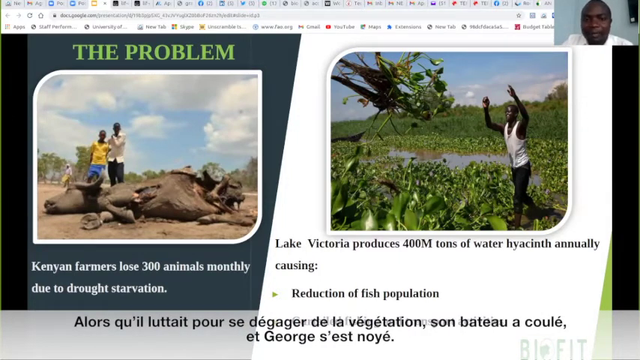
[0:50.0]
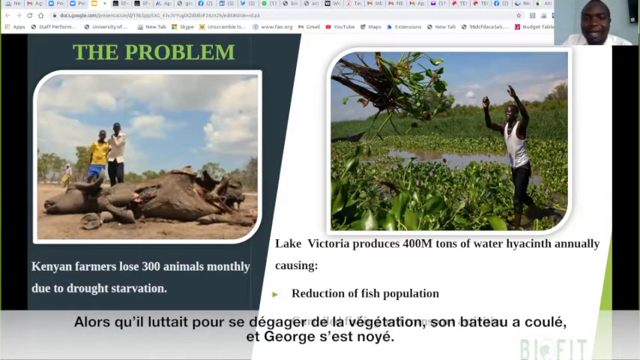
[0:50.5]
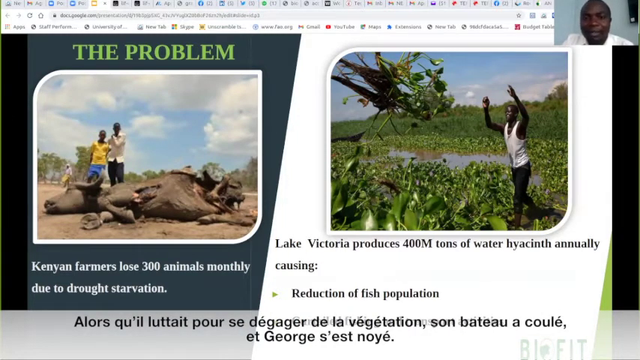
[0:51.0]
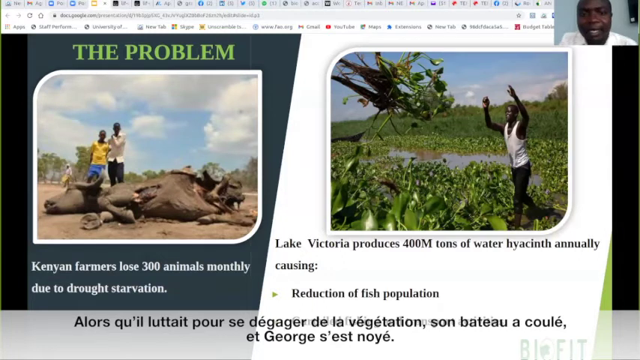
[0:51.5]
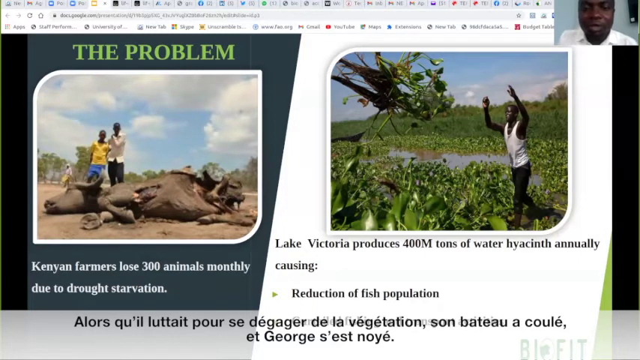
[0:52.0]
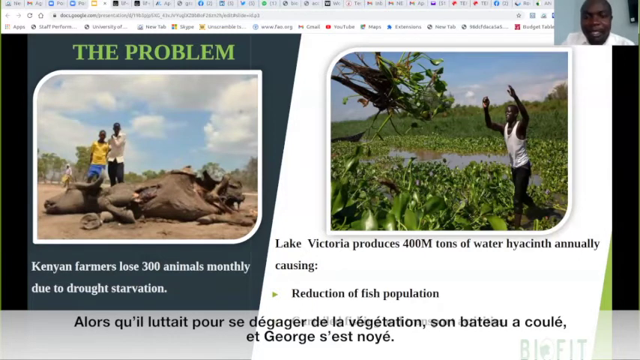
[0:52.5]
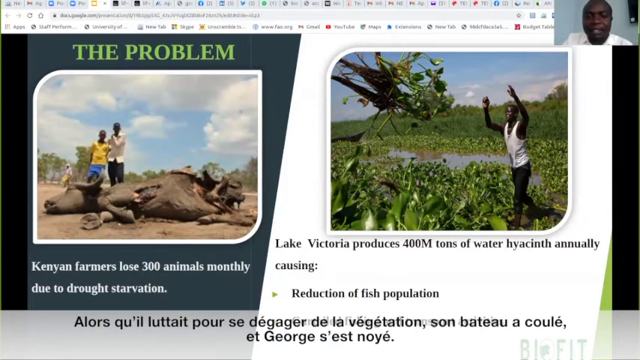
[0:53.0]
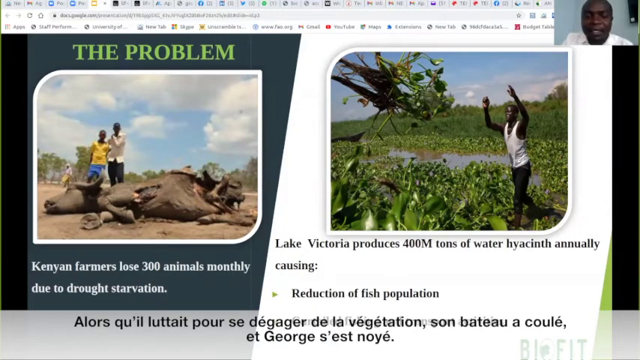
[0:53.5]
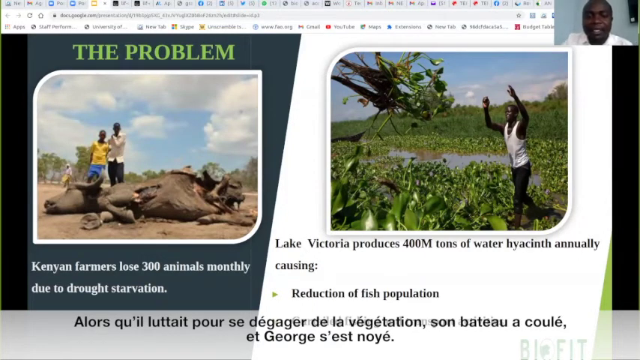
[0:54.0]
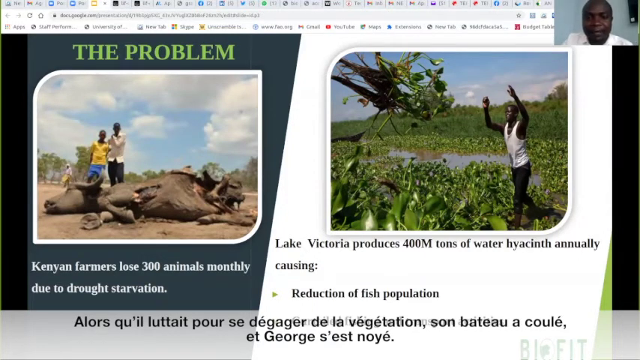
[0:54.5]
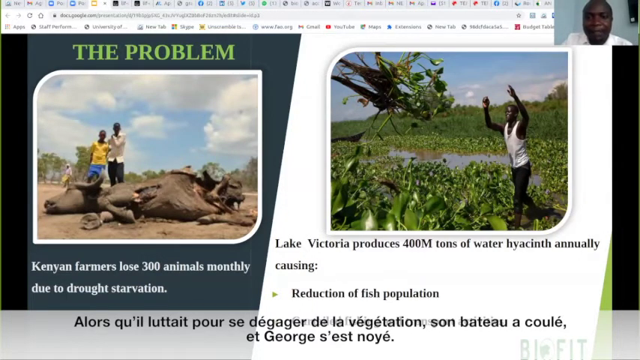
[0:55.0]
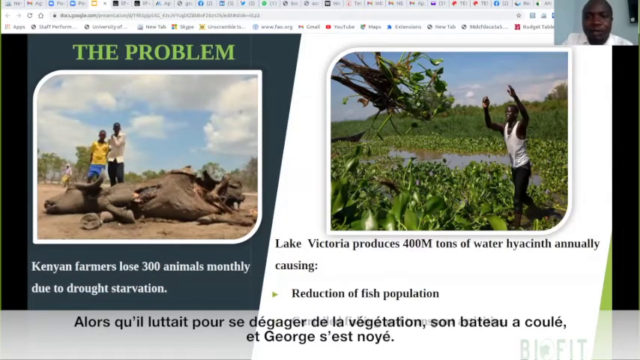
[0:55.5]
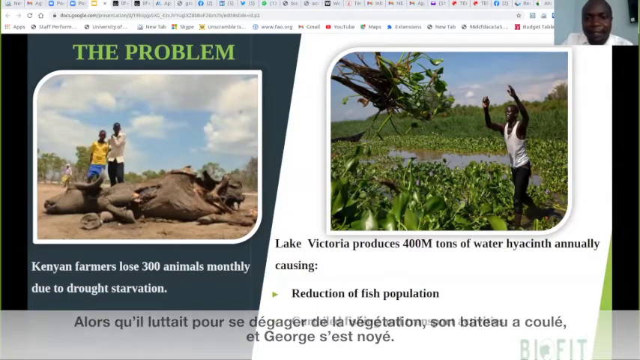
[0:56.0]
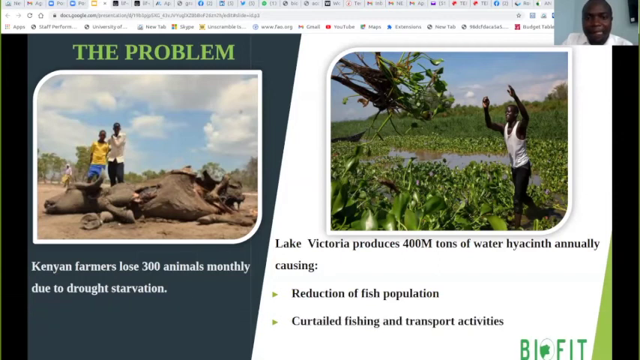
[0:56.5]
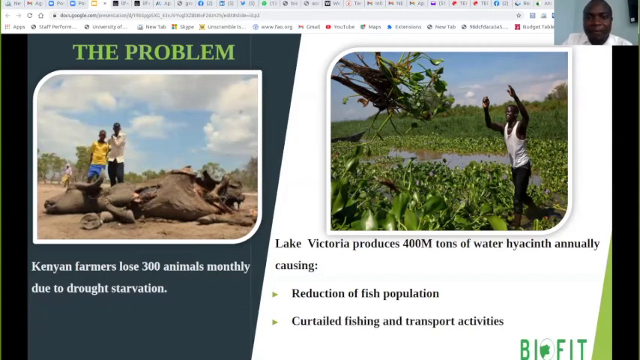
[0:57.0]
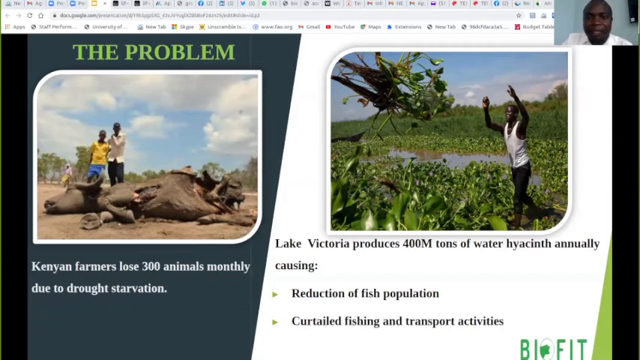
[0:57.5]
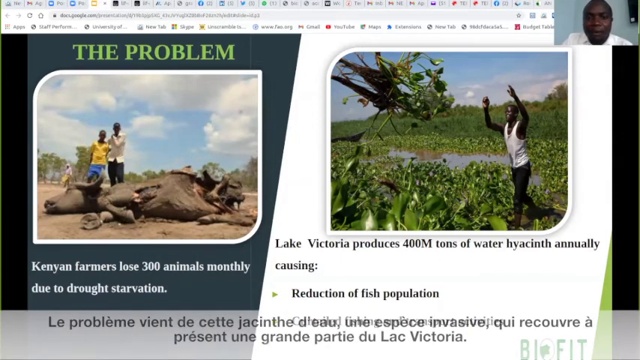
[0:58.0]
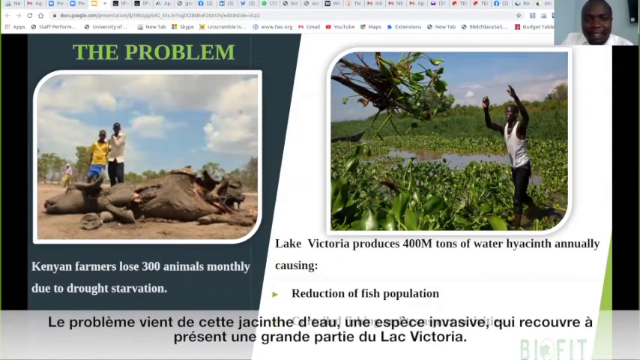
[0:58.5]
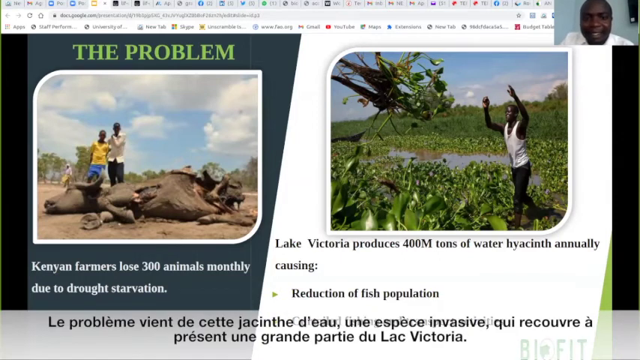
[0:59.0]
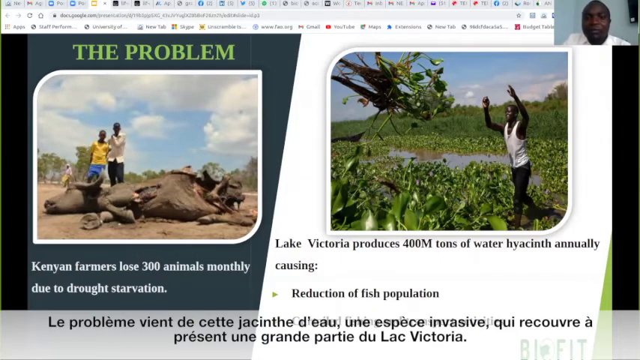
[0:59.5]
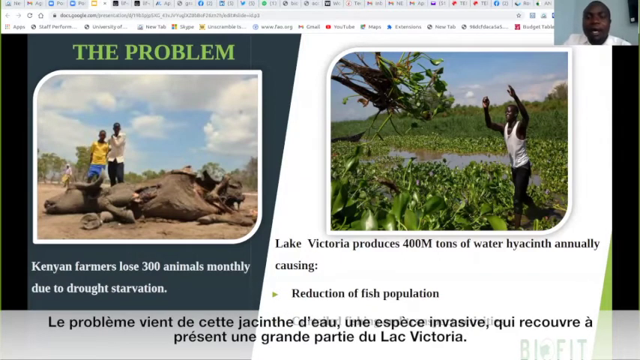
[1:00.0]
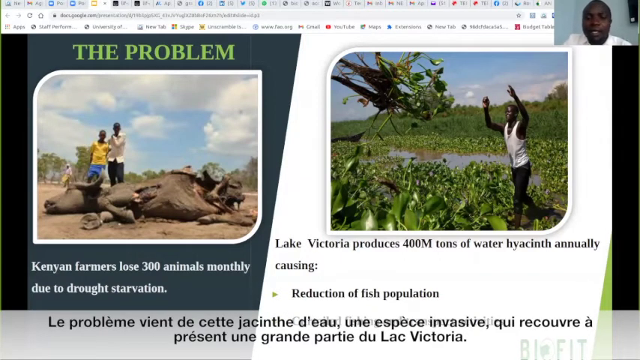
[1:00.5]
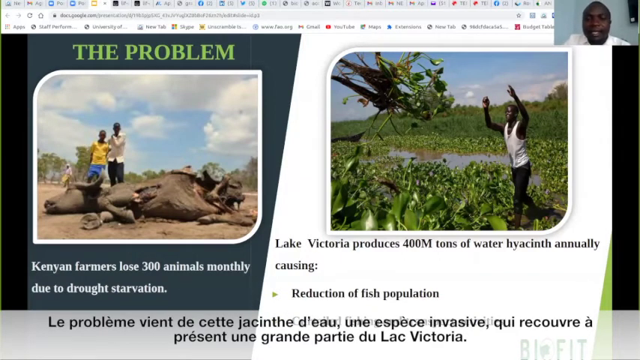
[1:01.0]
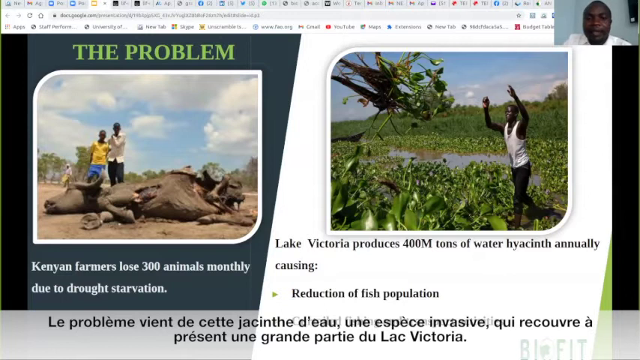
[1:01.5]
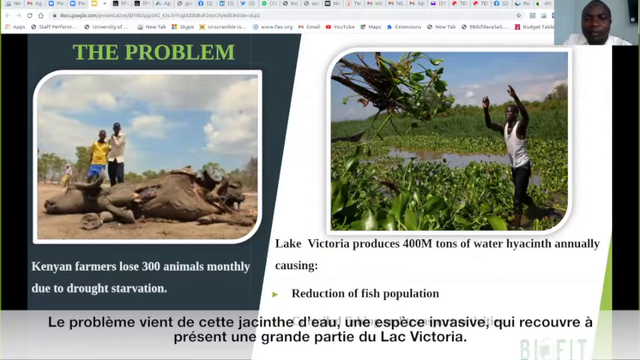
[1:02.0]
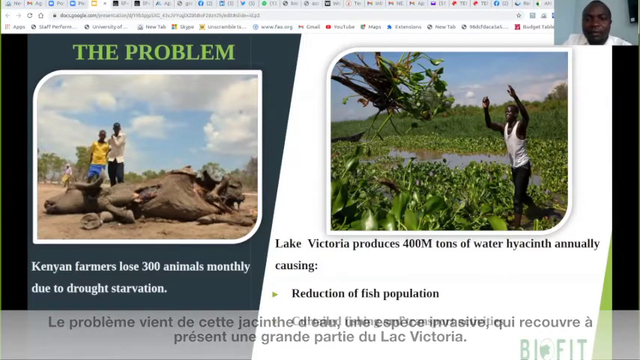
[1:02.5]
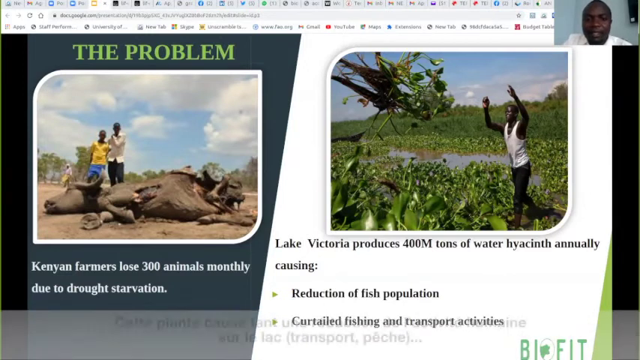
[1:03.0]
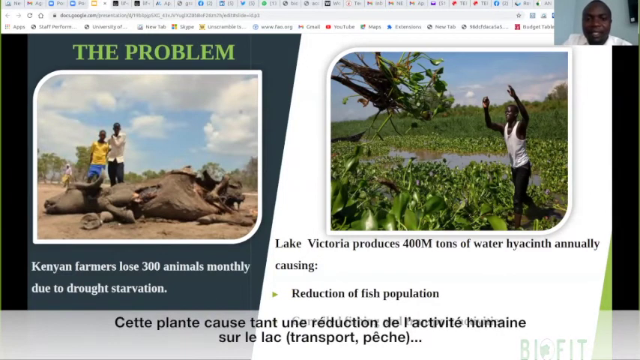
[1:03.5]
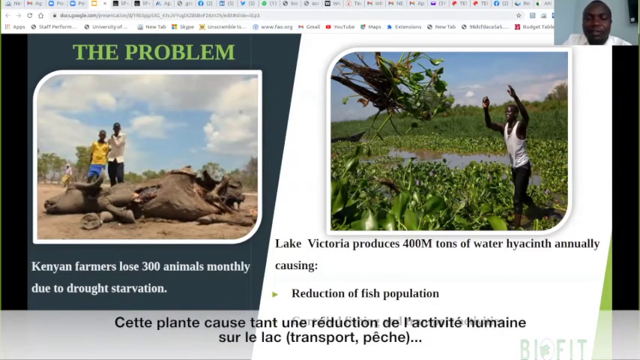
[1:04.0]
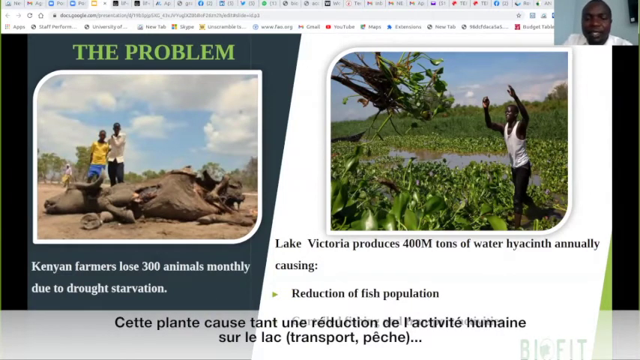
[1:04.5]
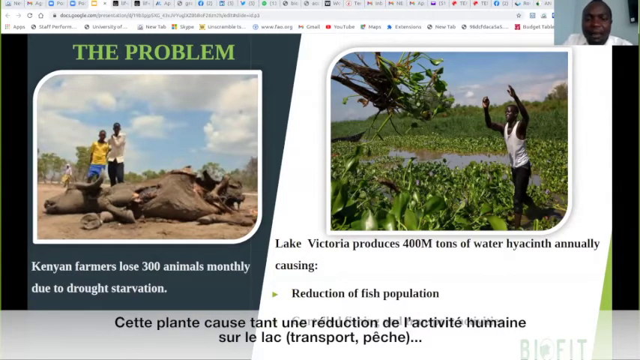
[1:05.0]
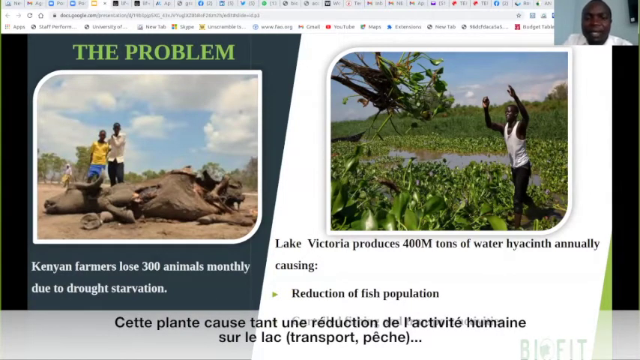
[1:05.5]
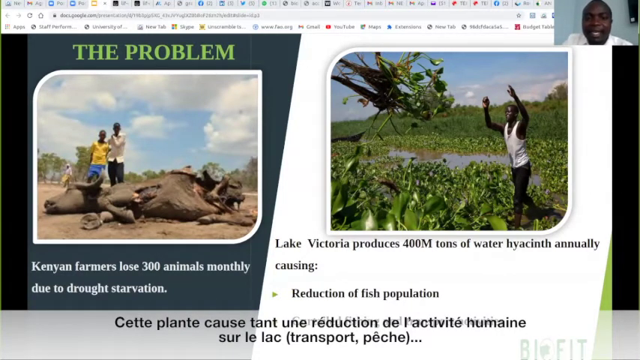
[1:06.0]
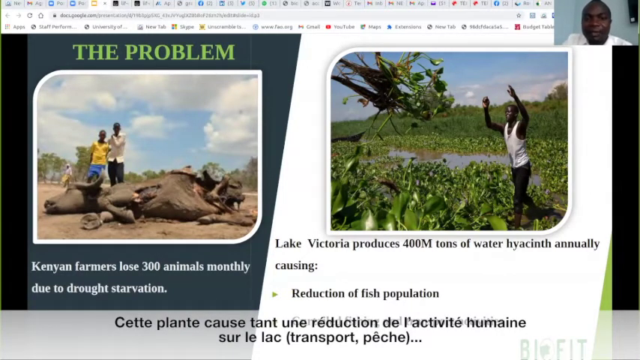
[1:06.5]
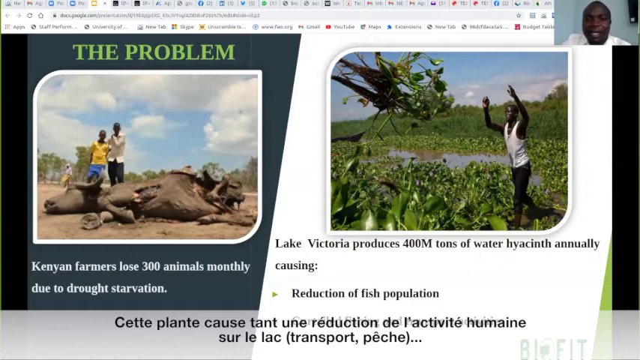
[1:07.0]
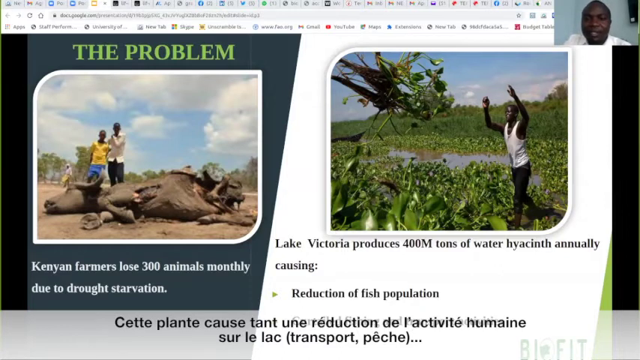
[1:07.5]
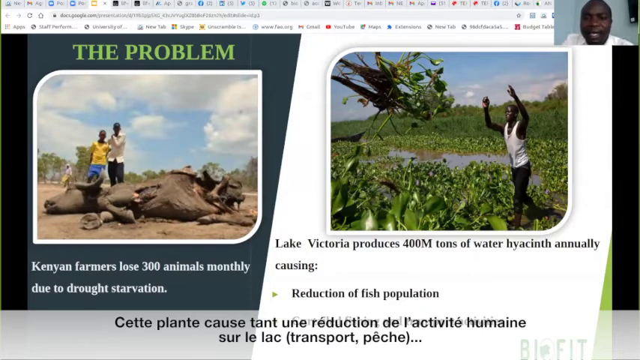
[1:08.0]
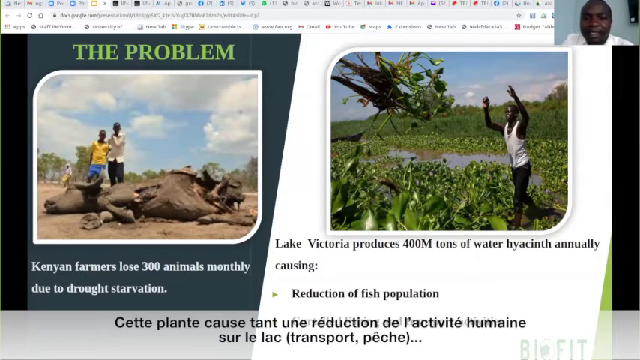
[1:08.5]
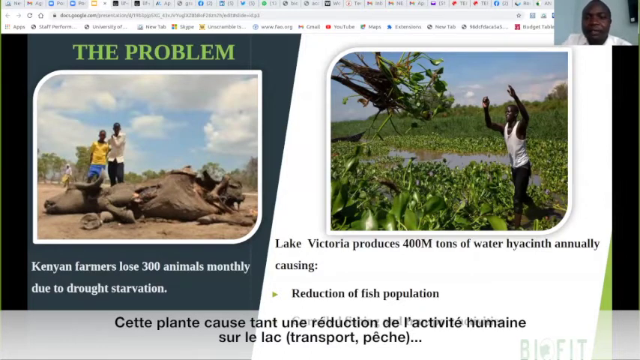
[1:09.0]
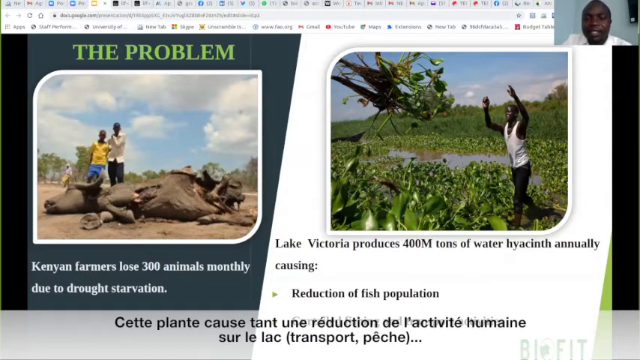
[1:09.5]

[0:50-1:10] The slide still presents the problem in Kenya: the loss of 300 animals monthly due to drought starvation, and a reduction in the fish population. There is another item in French at the bottom that cannot be read. In a picture by Lake Victoria, a man in shorts and a white tank top appears to be pulling the hyacinth out of the lake and tossing it aside.